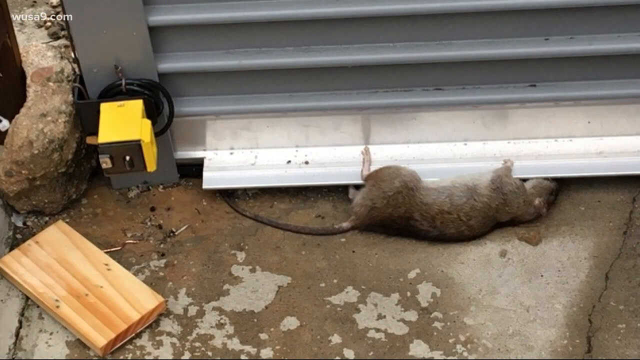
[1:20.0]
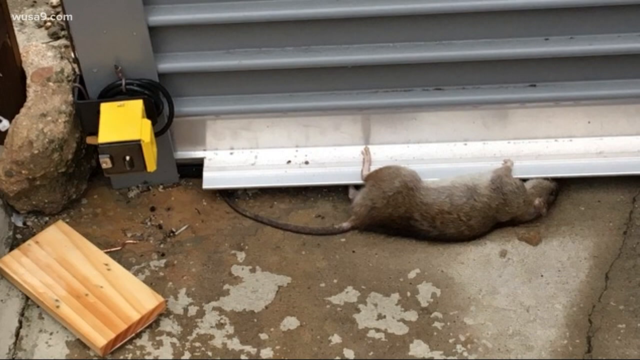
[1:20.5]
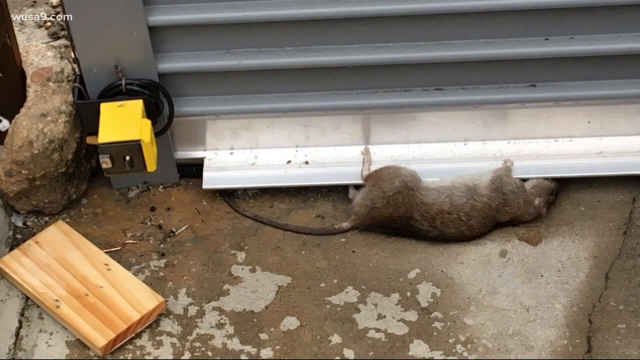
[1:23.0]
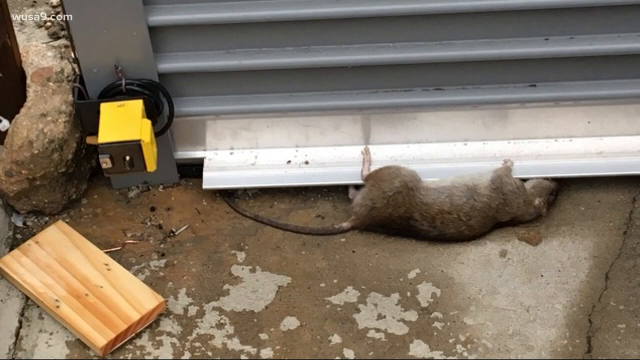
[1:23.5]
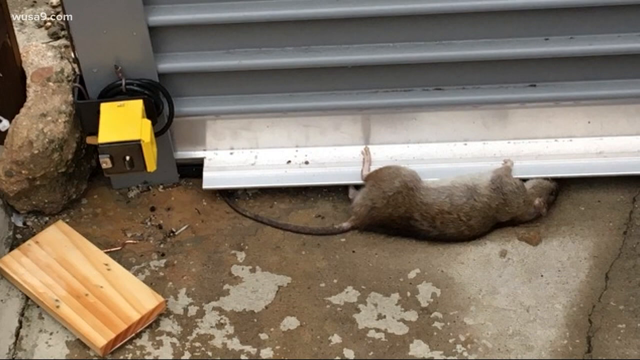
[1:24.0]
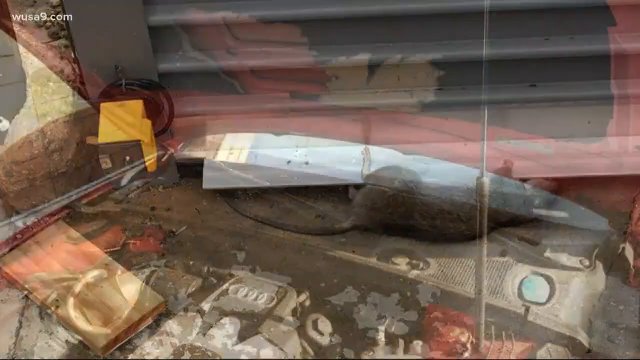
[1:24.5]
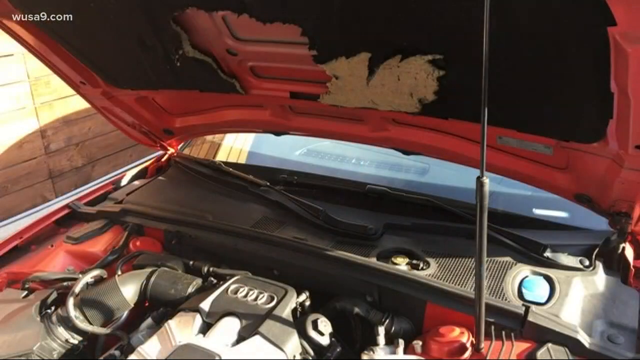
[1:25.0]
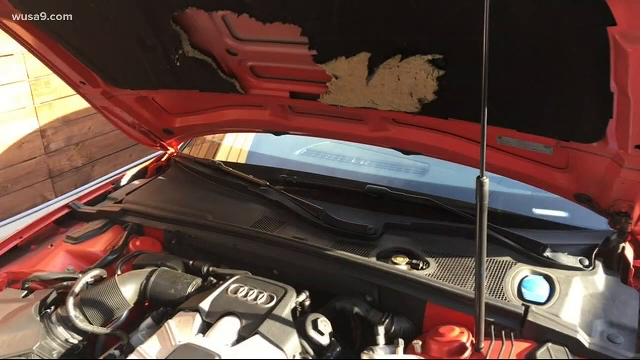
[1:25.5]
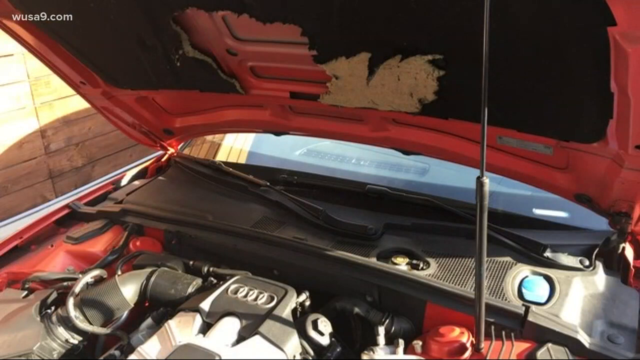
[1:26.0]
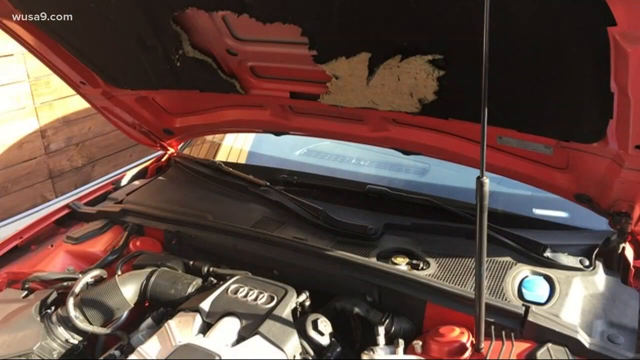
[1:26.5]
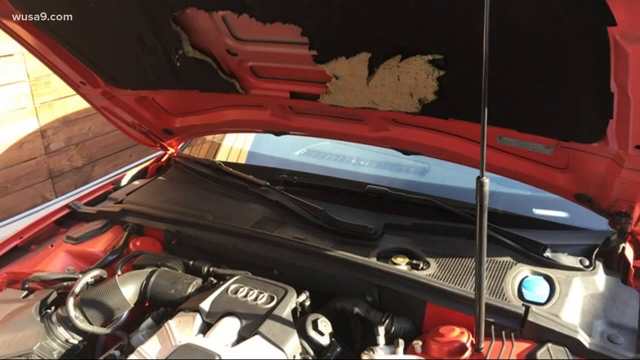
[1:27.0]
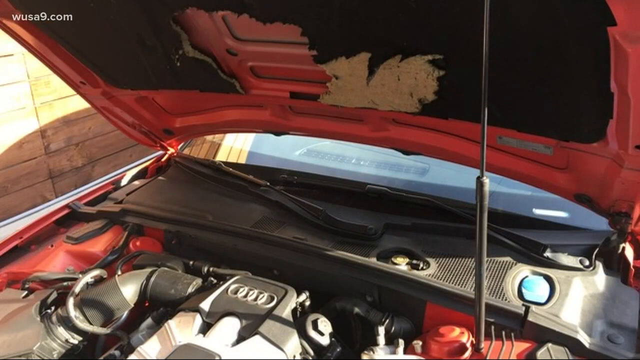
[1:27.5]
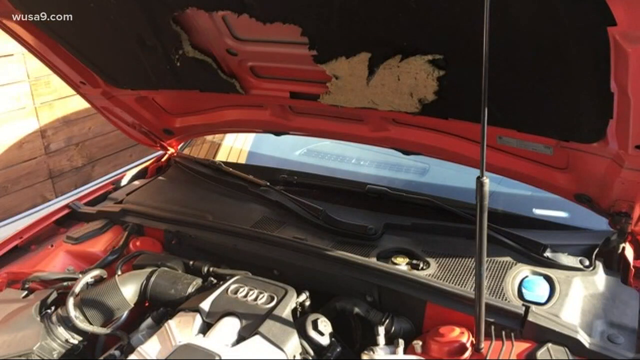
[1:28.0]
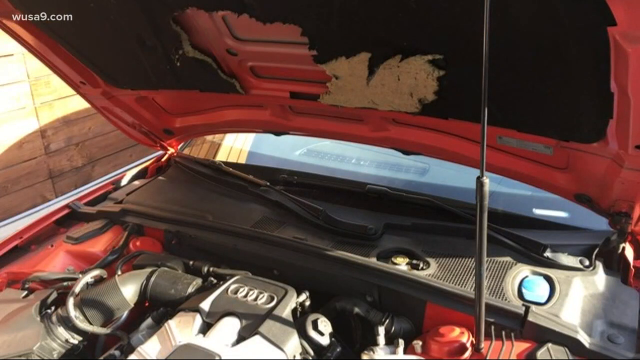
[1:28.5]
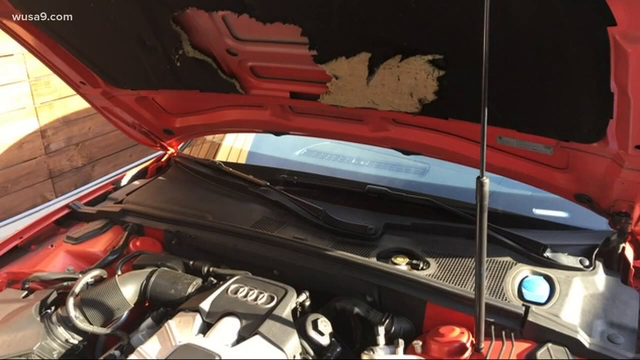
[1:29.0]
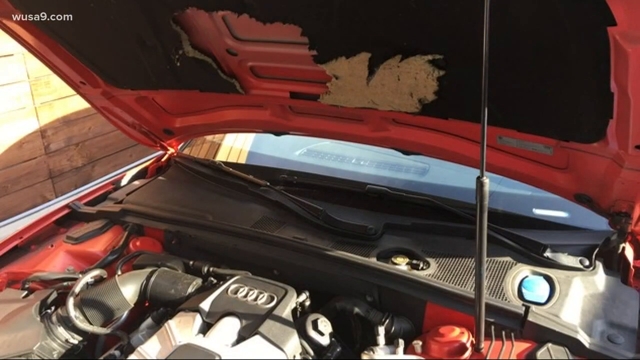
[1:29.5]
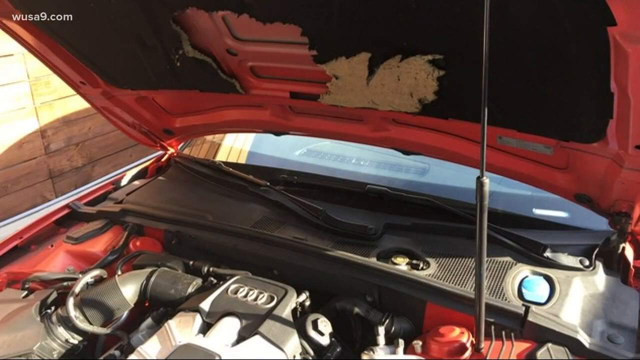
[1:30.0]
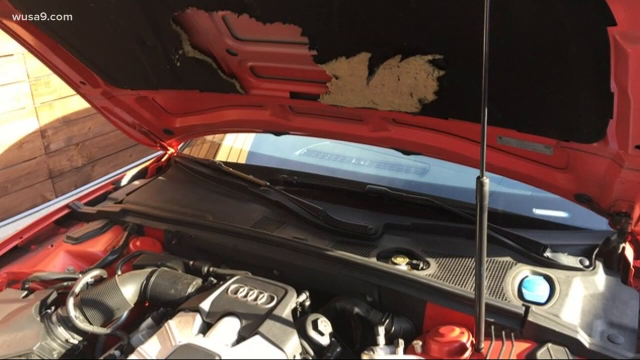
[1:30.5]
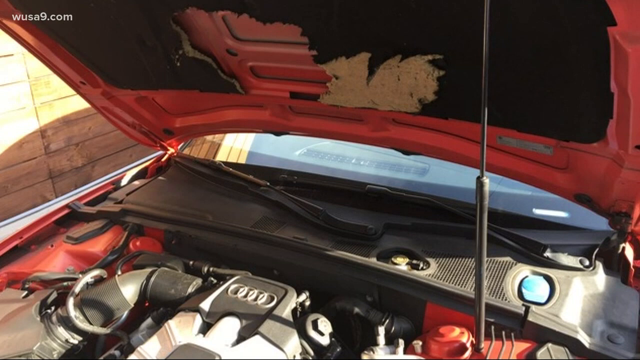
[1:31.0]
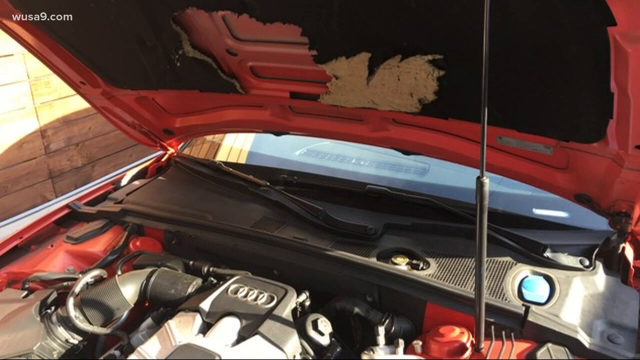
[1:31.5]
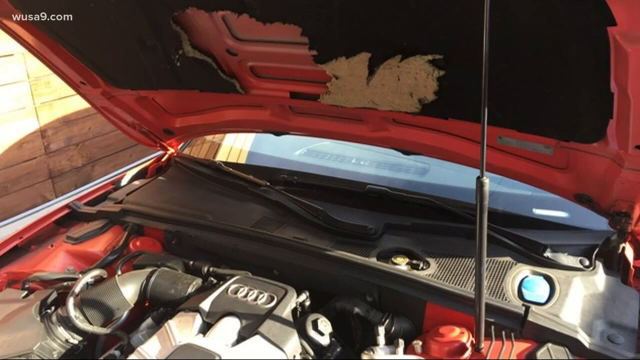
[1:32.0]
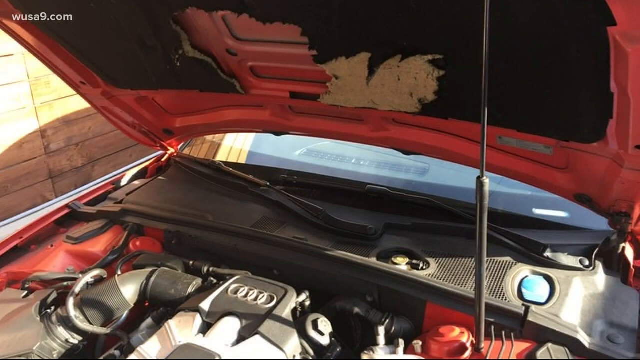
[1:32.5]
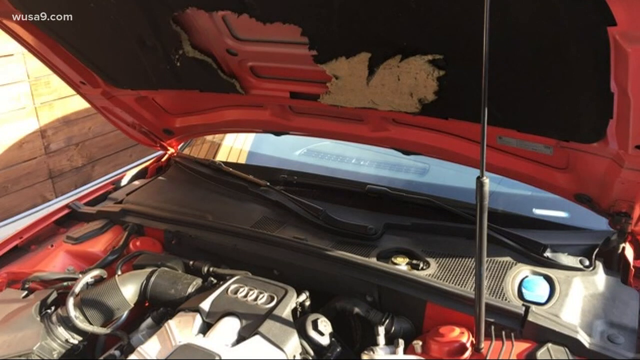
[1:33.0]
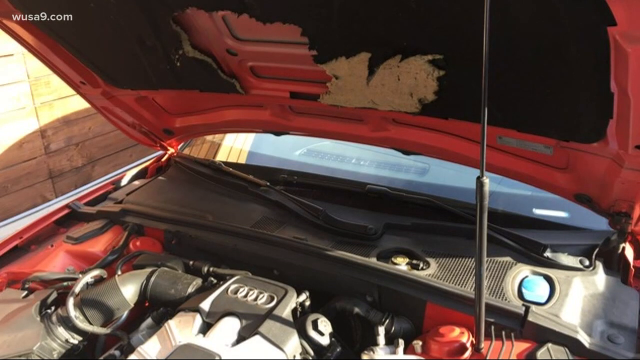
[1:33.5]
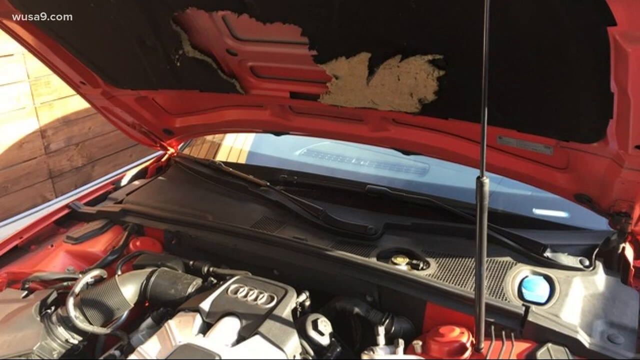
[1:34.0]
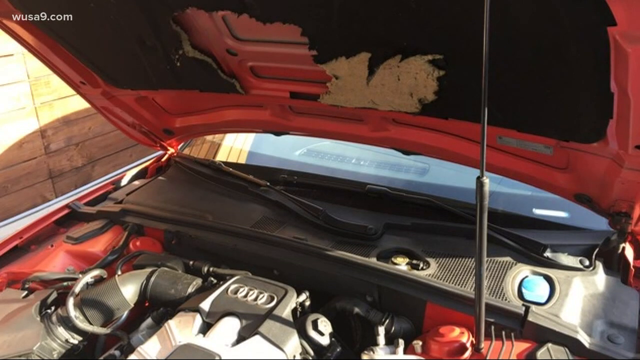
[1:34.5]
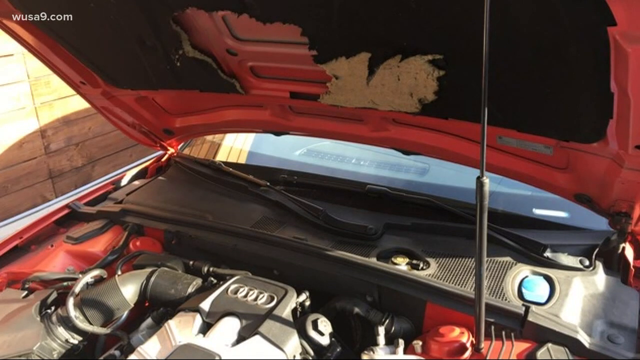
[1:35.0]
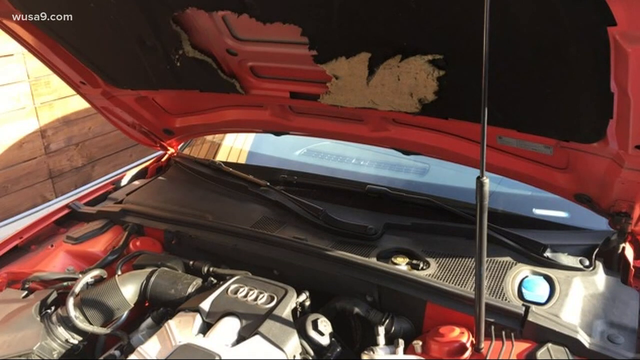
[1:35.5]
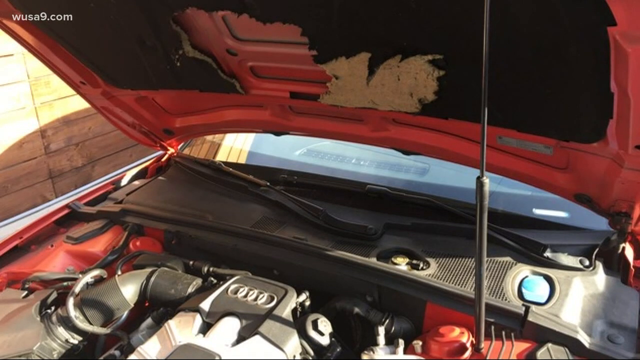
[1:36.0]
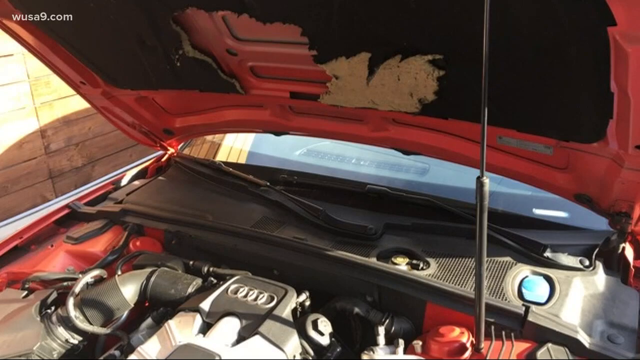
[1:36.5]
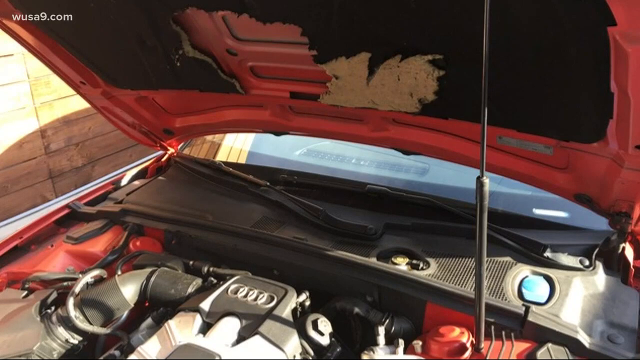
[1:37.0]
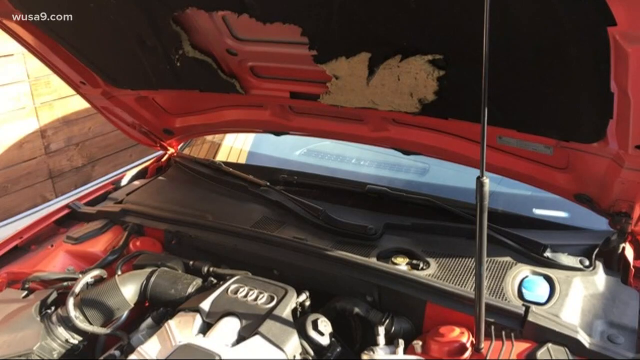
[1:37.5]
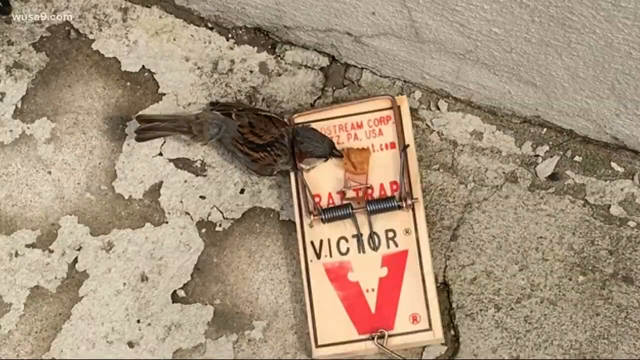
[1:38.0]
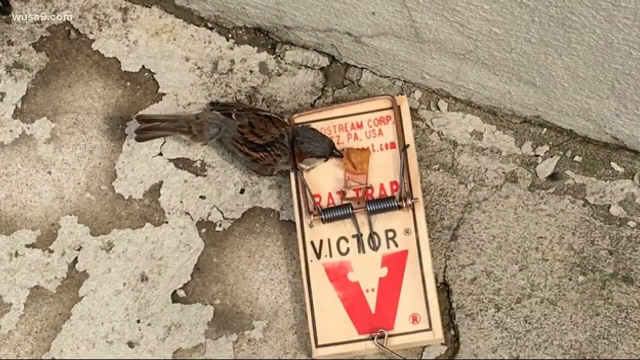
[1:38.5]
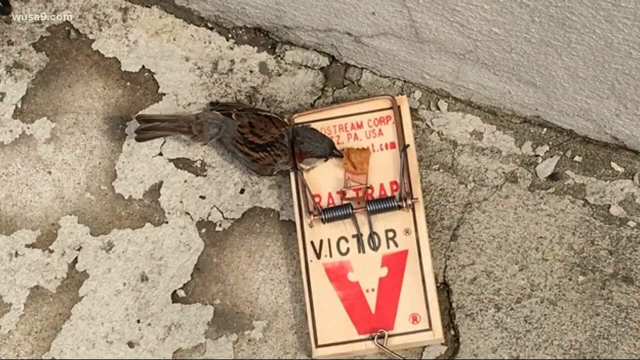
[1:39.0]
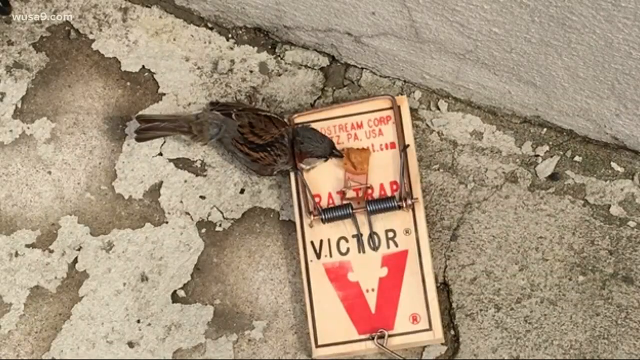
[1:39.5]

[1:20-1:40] A picture shows a huge, fat rat trapped underneath a shiny metallic sheet. It is lying on the ground on its back, with half of its body exposed while its head and tummy are hidden inside the metallic sheet, and it uses its limbs to hold on to the sheet. Its tail is very long. There is a lot of dirt on the floor, a wooden plank a few centimeters from the rat, and a crack in the concrete floor. The video then cuts to a picture of a red car with its hood open; the interior of the hood is worn out. The car is parked next to a wall with sunlight reflected on it, suggesting it may be a hot day. The video then briefly cuts to a rat trap.